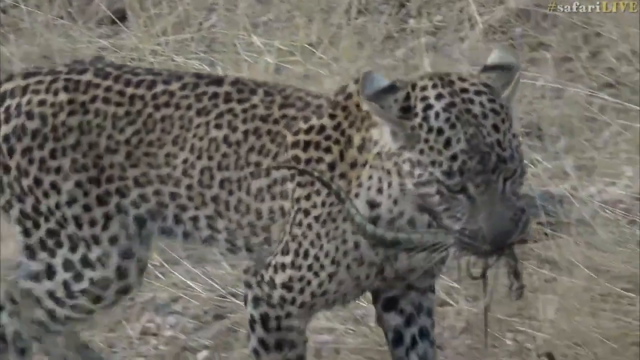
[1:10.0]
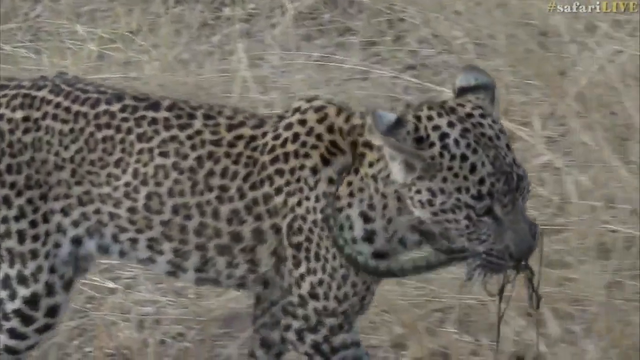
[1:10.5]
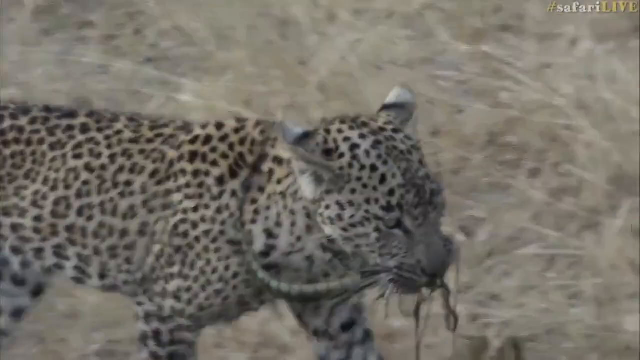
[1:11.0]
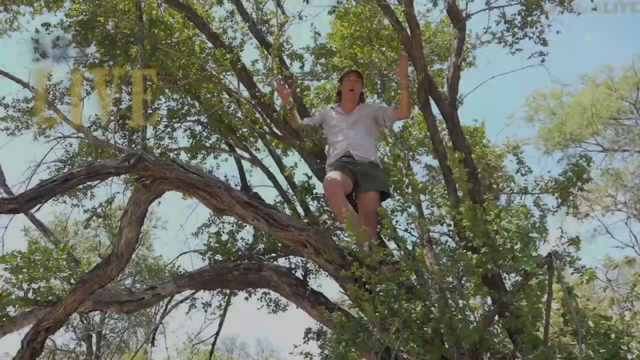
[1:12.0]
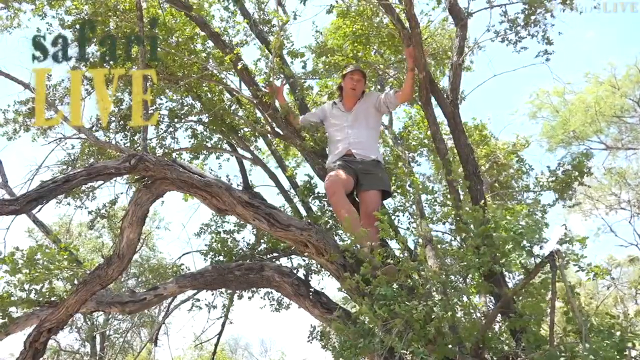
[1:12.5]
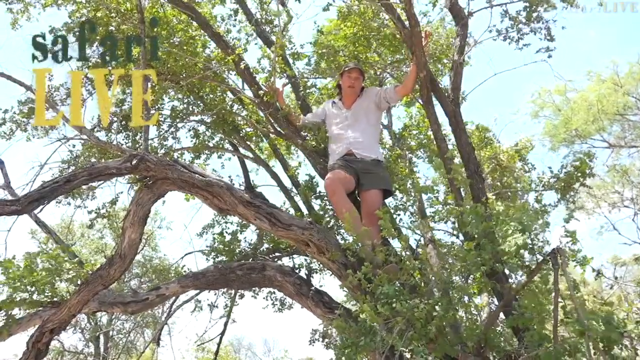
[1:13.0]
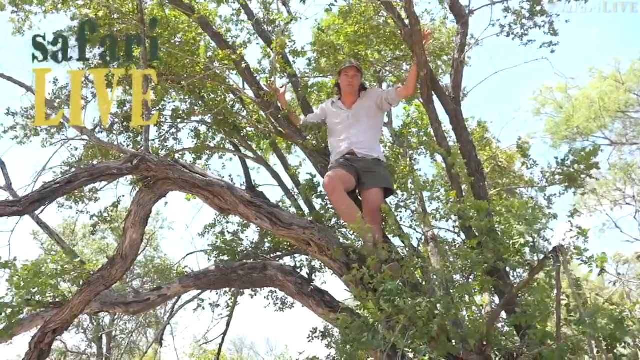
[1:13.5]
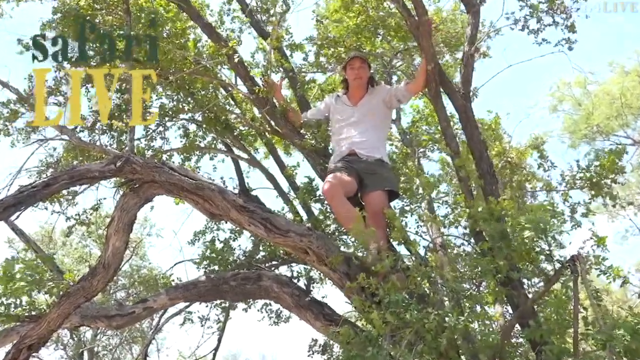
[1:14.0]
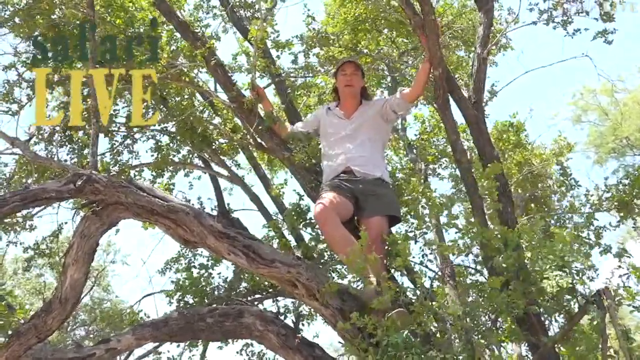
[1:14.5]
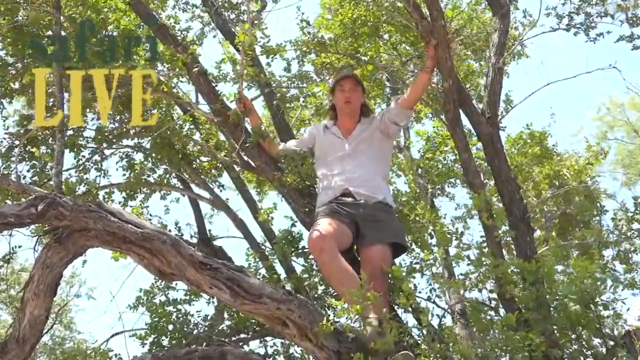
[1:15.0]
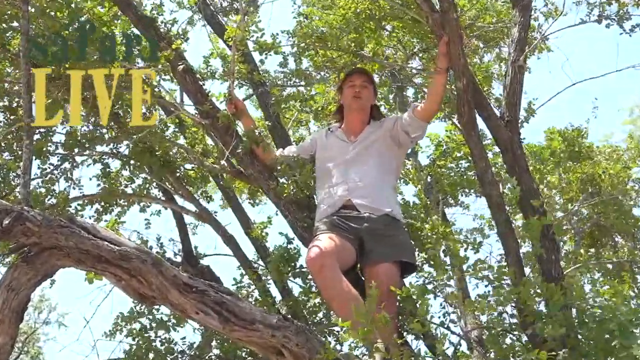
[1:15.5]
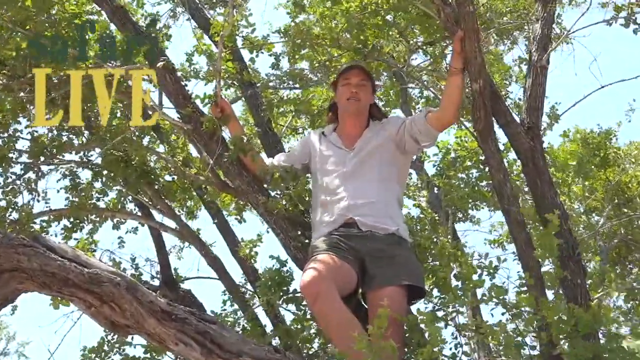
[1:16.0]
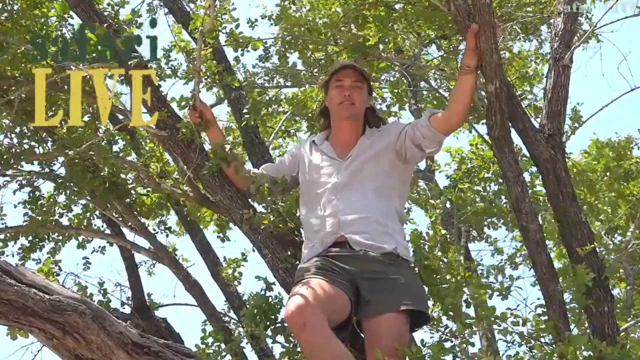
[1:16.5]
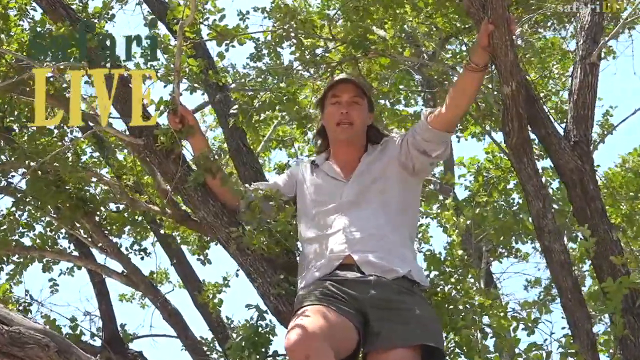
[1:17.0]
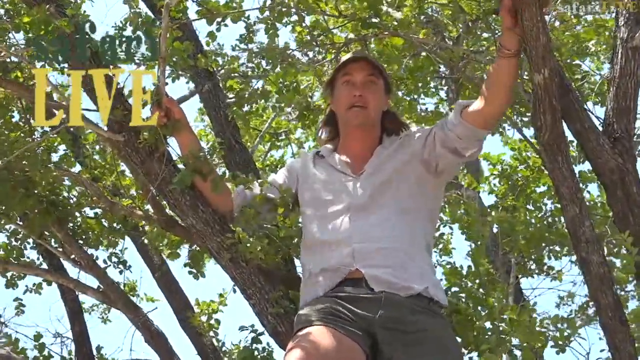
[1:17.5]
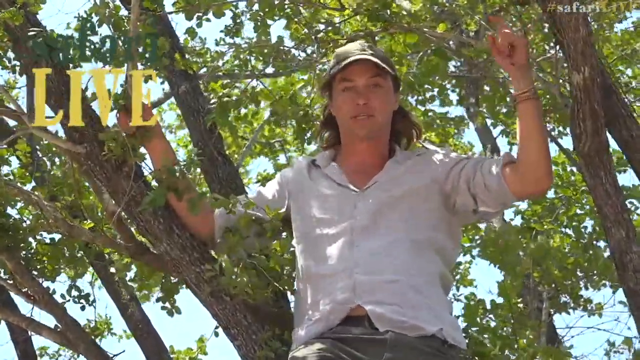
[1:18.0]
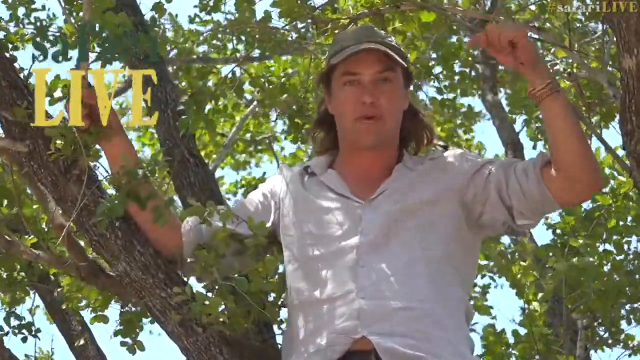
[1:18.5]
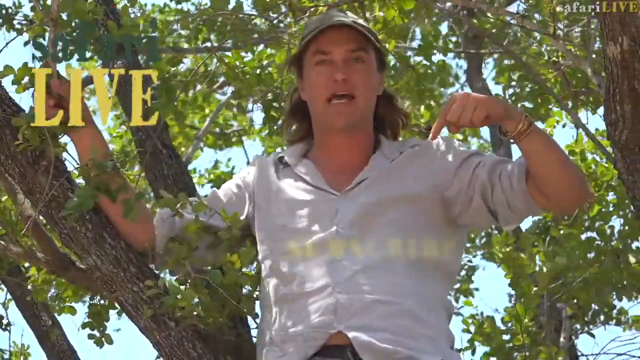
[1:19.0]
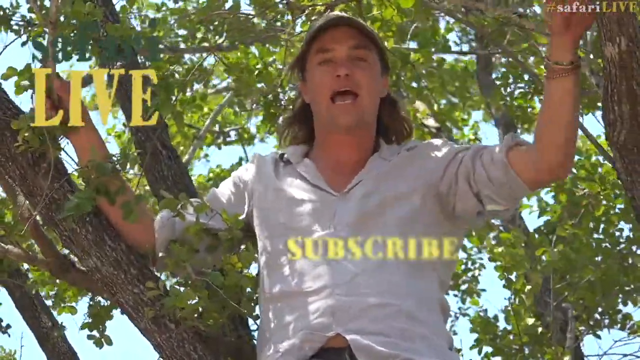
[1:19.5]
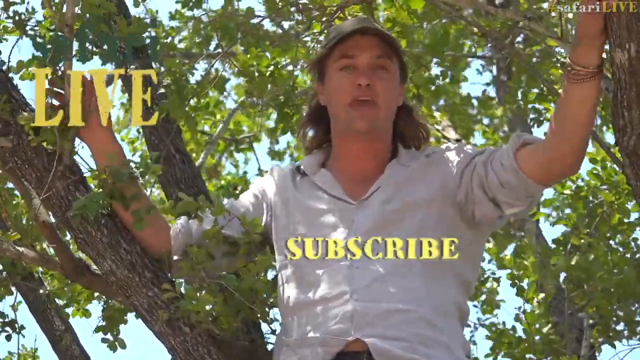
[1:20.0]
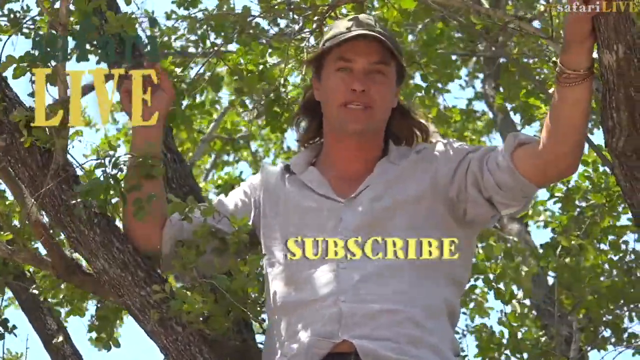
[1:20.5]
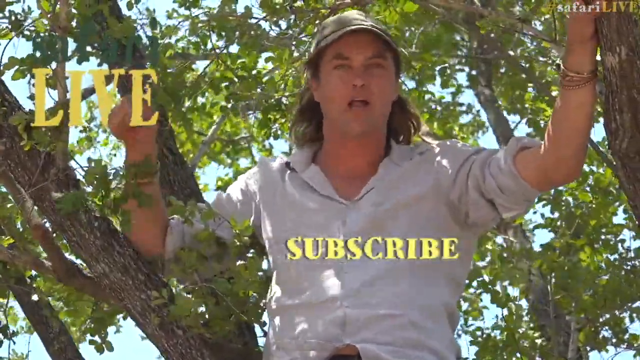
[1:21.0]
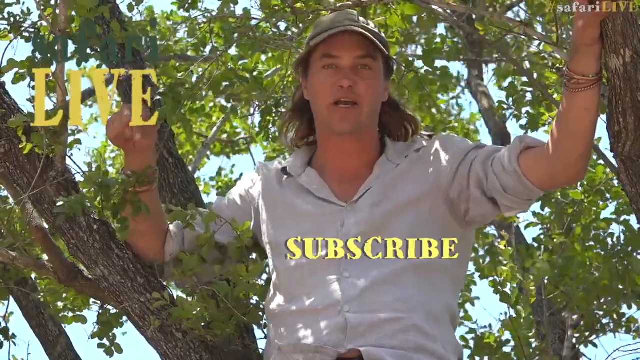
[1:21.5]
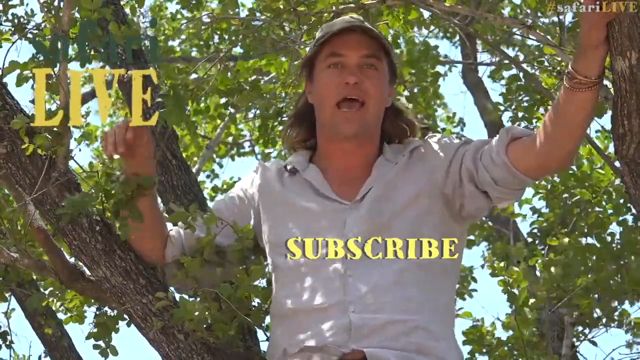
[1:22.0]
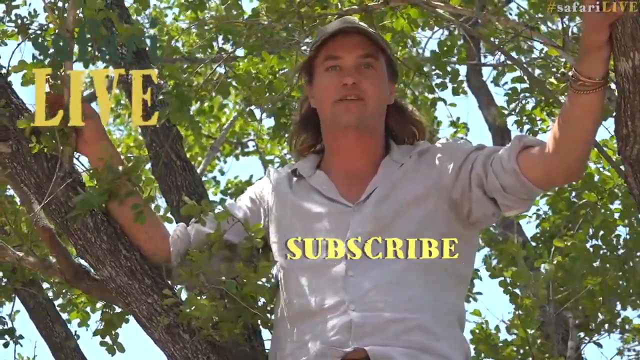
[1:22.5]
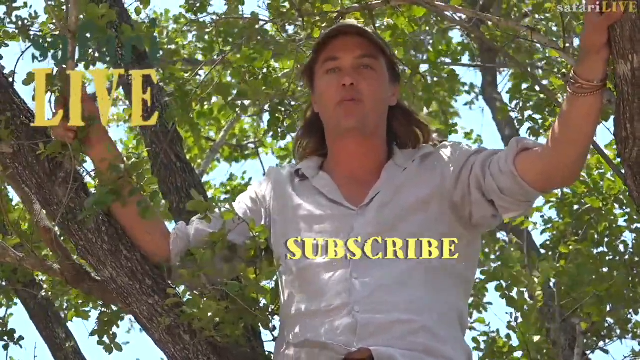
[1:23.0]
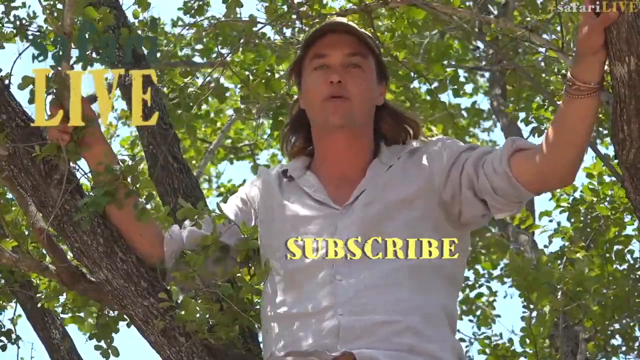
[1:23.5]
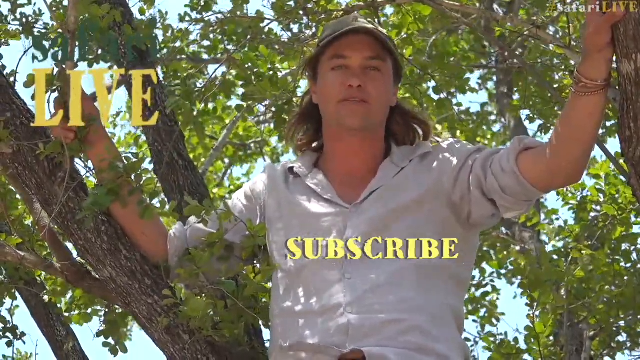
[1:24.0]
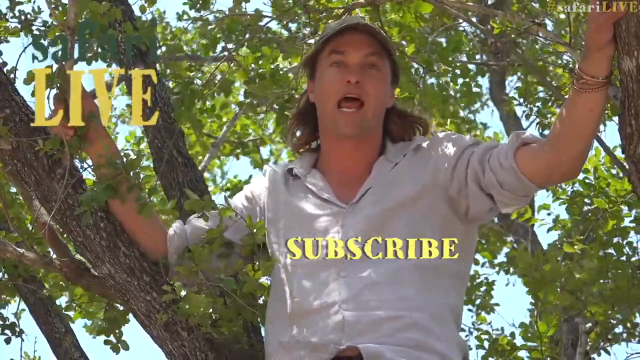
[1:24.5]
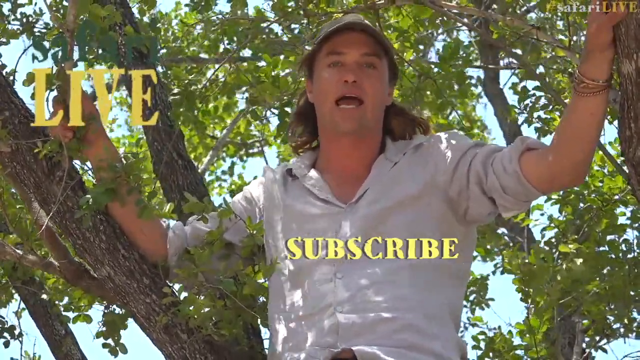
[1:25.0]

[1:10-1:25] The cheetah moves with the fish held in its mouth. A man is on top of a tree with green leaves, speaking into the camera. He wears a shirt, gray short trousers and a brown cap. He seems to be giving updates about their channel and asking people to subscribe. He speaks quickly and confidently, using his hands and body as he talks. The tree and its leaves are moving, apparently because it is a windy day. The camera focuses more on the man's face as he speaks. The picture quality is not very clear, which can make it hard to understand what is happening.